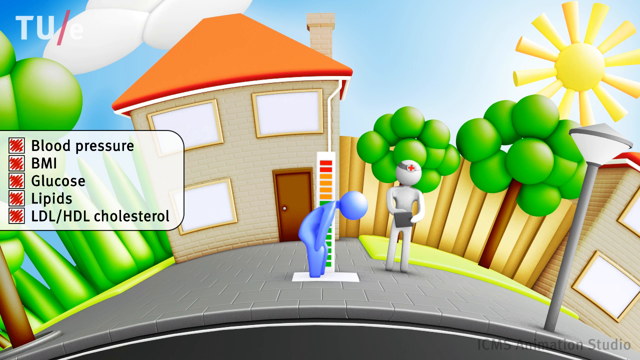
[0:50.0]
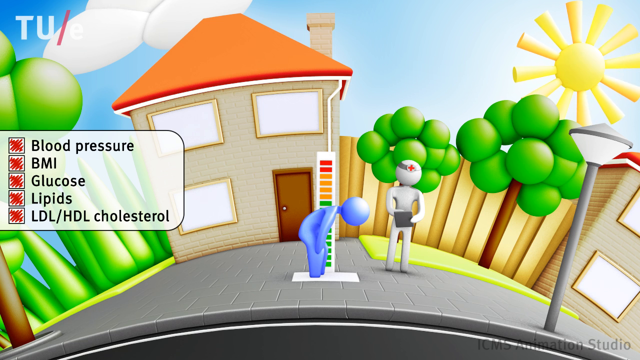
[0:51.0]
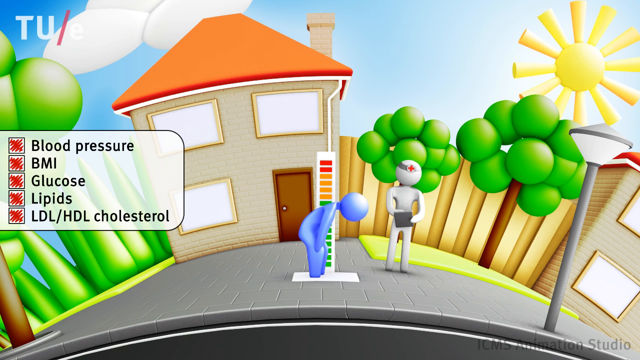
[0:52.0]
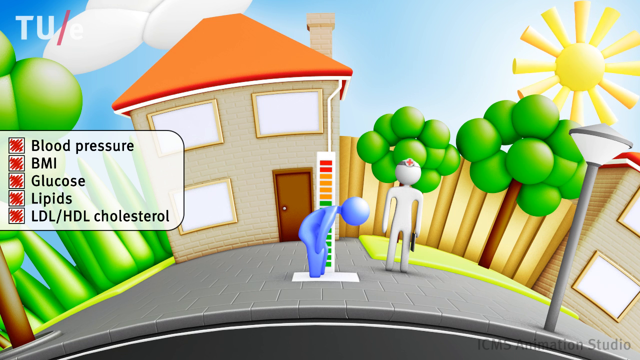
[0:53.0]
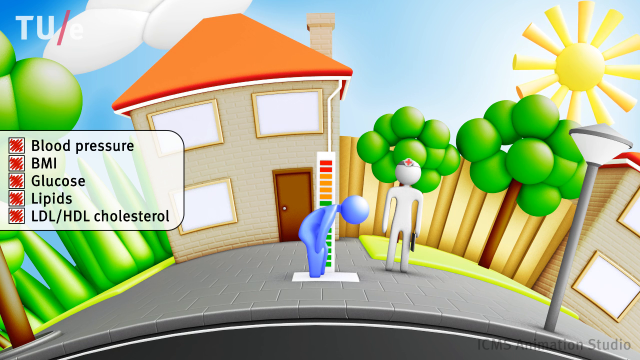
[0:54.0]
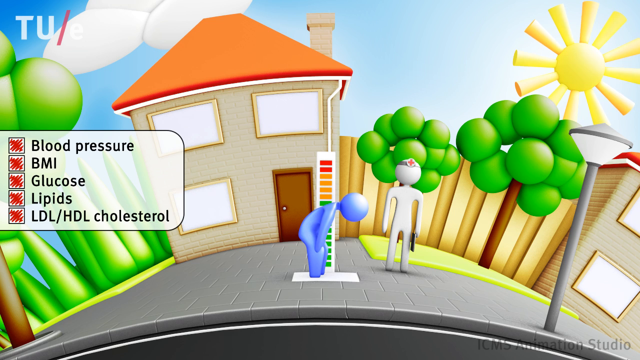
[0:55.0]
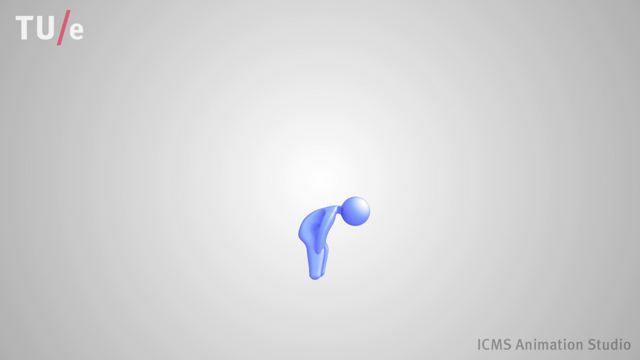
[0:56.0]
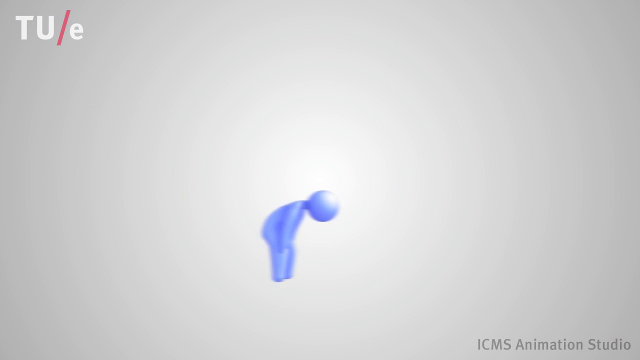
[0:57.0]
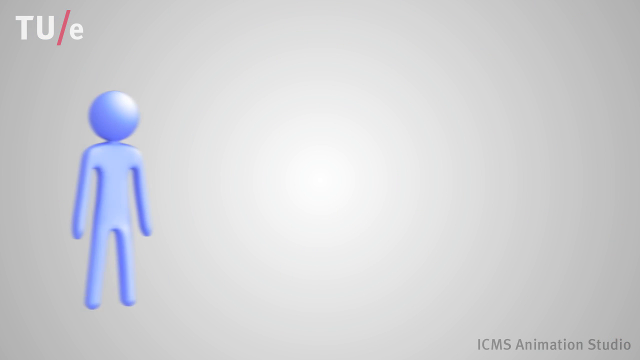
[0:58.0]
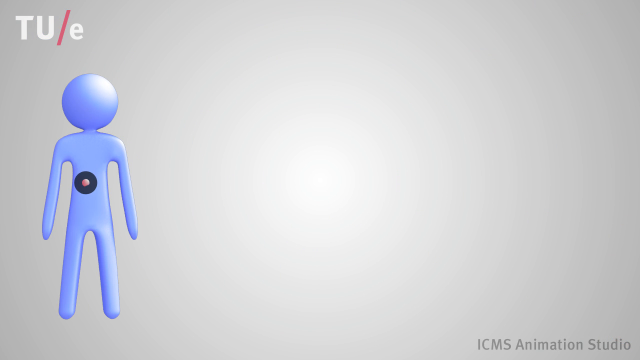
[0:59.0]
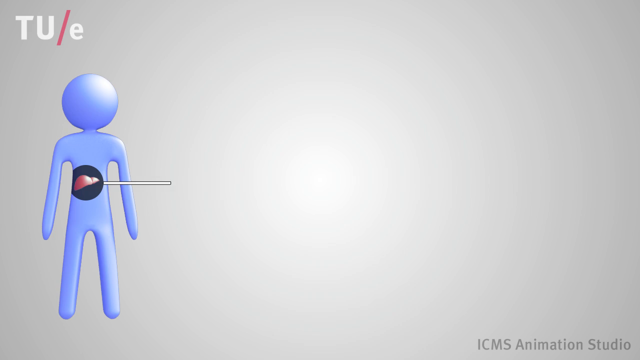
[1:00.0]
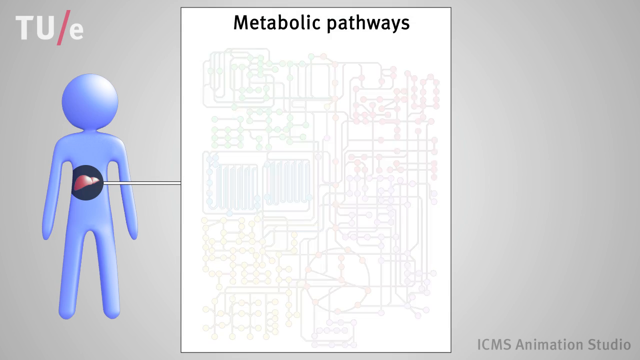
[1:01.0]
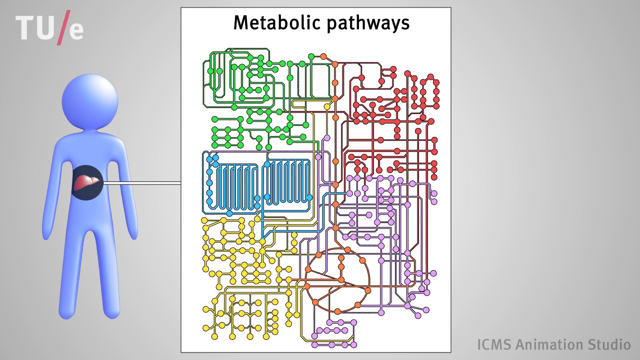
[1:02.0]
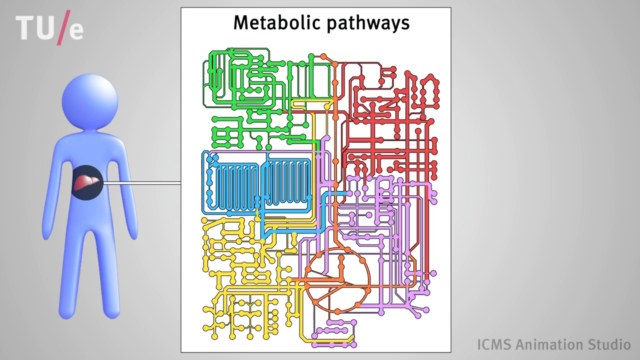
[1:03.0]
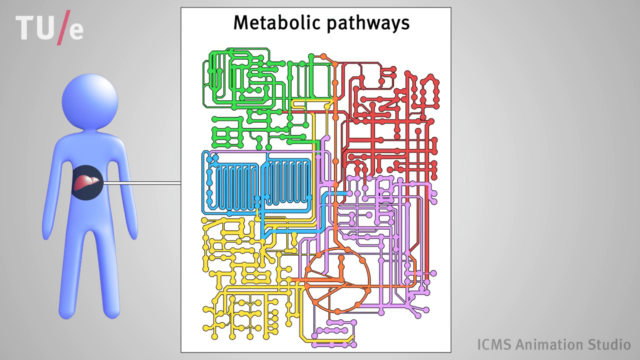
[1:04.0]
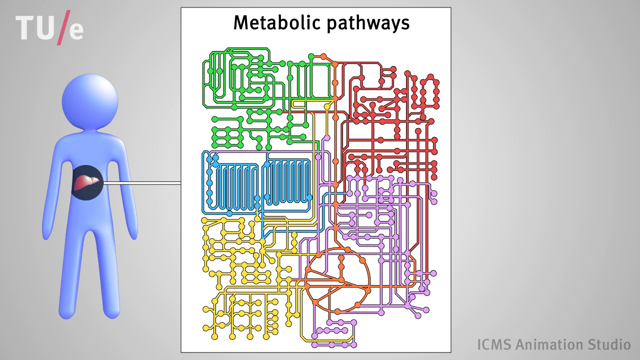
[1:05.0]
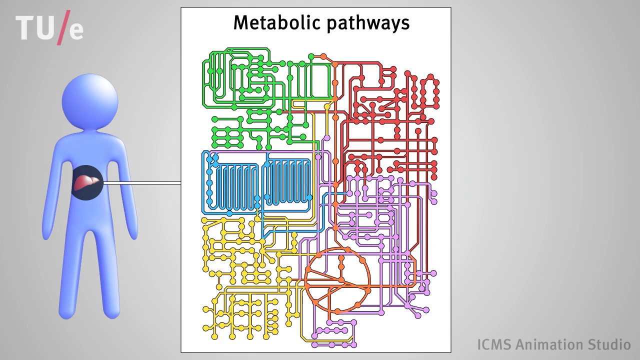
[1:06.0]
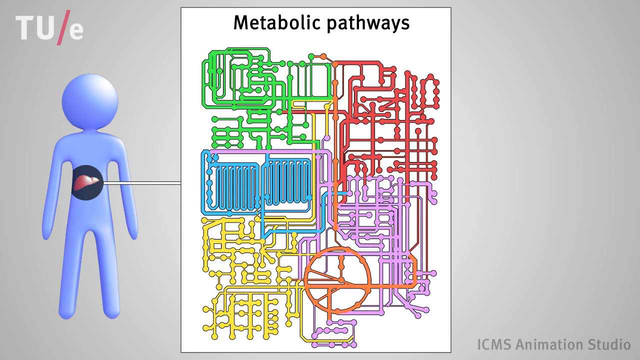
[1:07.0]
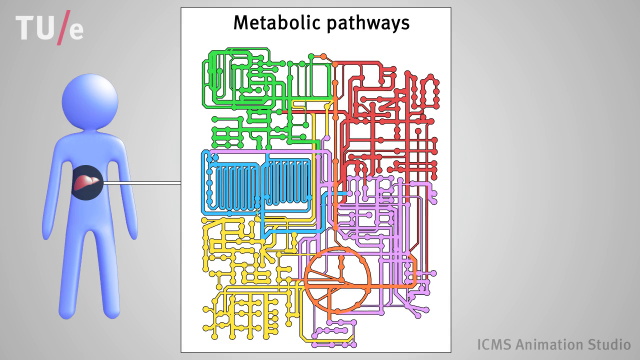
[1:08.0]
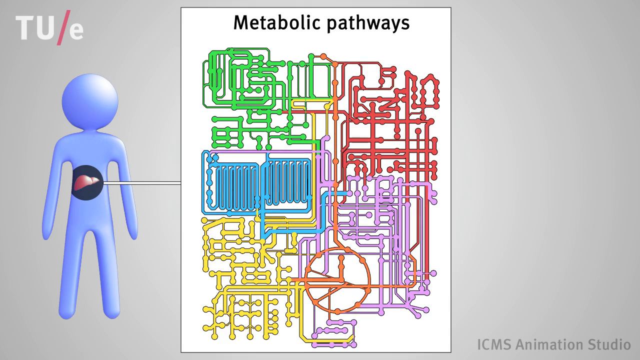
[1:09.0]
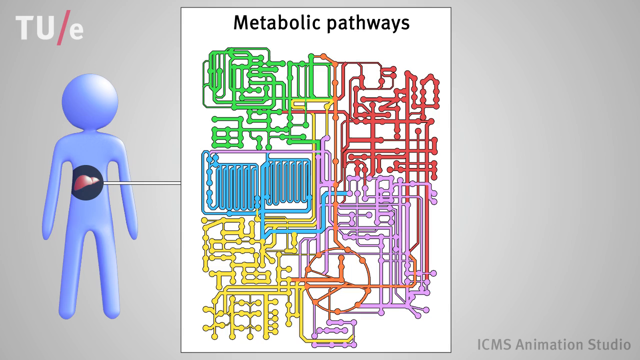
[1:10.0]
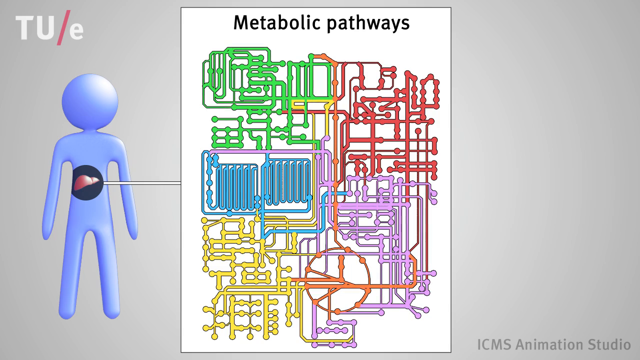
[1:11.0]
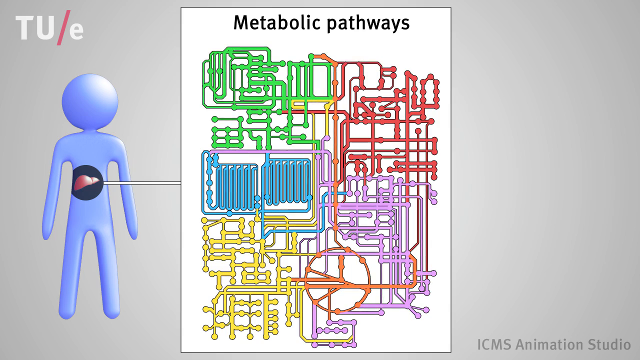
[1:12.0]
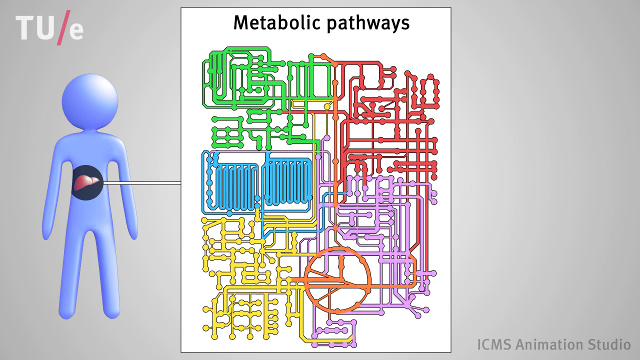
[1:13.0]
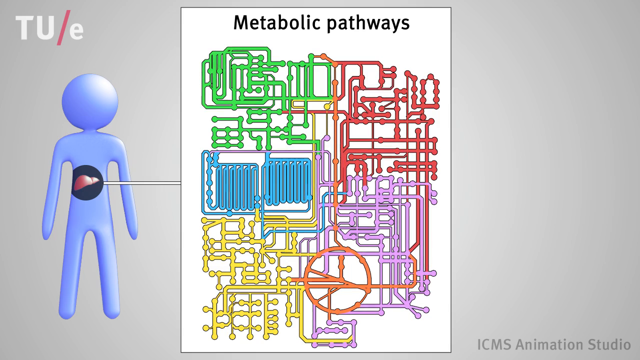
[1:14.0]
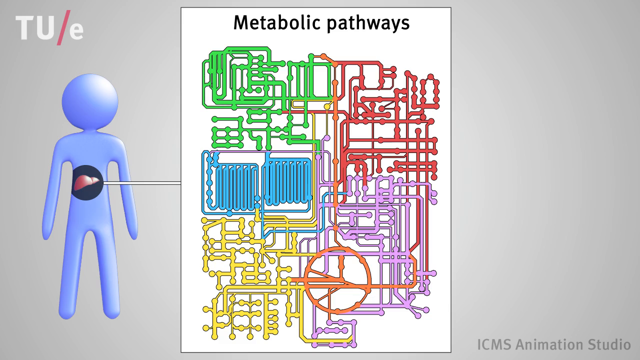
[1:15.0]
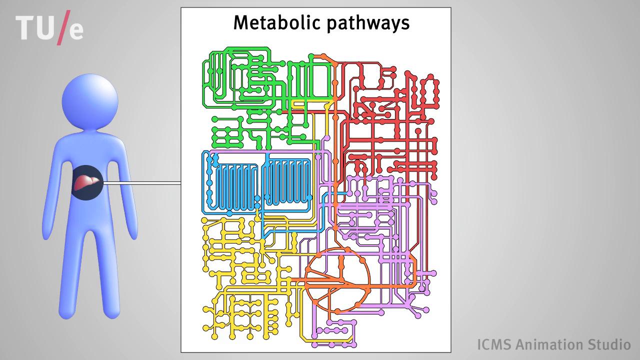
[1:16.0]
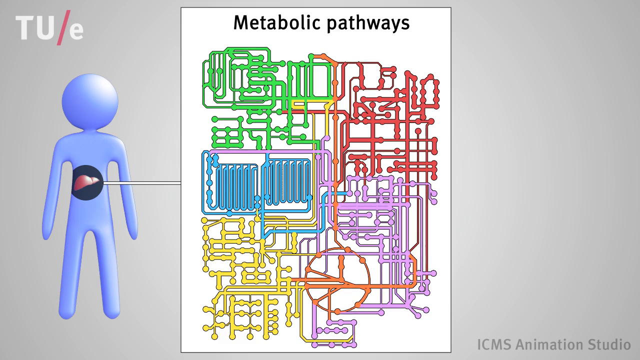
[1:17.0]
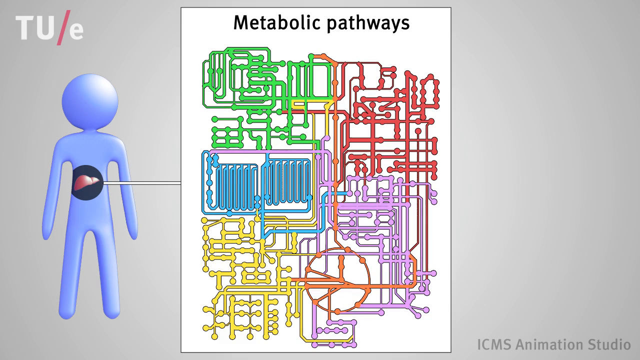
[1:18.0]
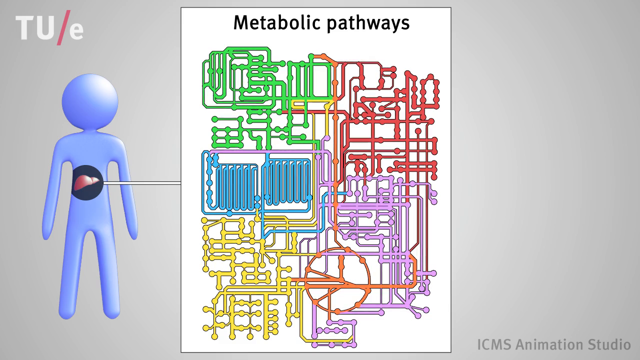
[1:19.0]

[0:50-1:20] In a colorful animation, two humanoid forms stand outside. The pale violet one stands on some sort of scale with green bars up to the midpoint and orange and red bars all the way to the top, bent over with hands on knees, seen from the side. To the right, a white humanoid form with a red cross on his head holds a clipboard and writes notes. Behind them are a house, trees and a picket fence, with the sun shining in the sky to the right. On the left side are human metabolic measurements: blood pressure, BMI, glucose, lipids, and LDL/HDL cholesterol, all shaded red on a check box to the left, showing their status is not good. The violet humanoid seems exhausted and looks like it is panting, bent over. The white humanoid lowers his clipboard and shakes his head. The screen then transitions to a very pale silver background with a purple humanoid form. A black circle animates on it, showing what looks like the purple humanoid's liver. A white line then points to an illustration titled "Metabolic Pathways", showing what looks like plumbing in red, green, blue and yellow, illustrating the metabolic pathways in the liver. This stays on screen for about five seconds.